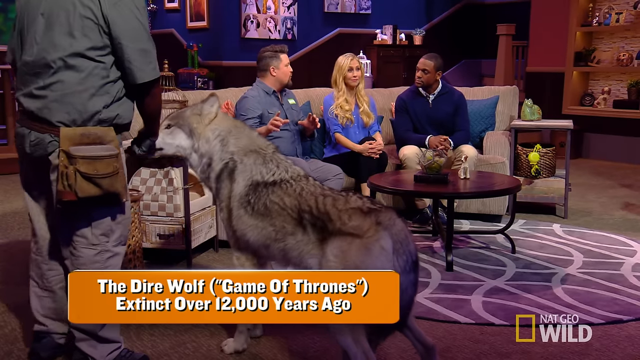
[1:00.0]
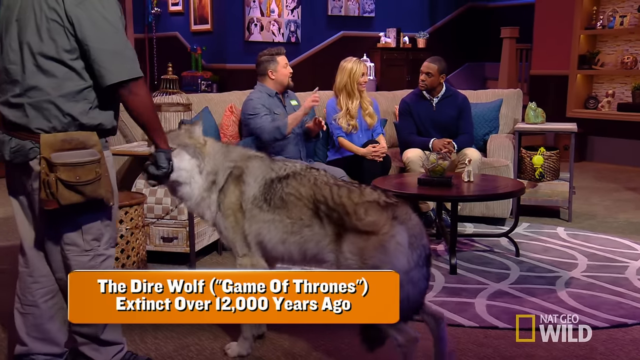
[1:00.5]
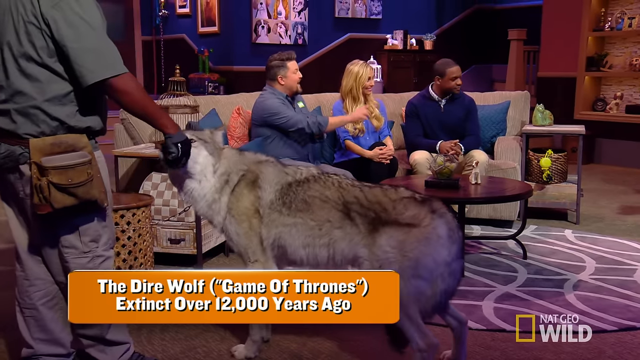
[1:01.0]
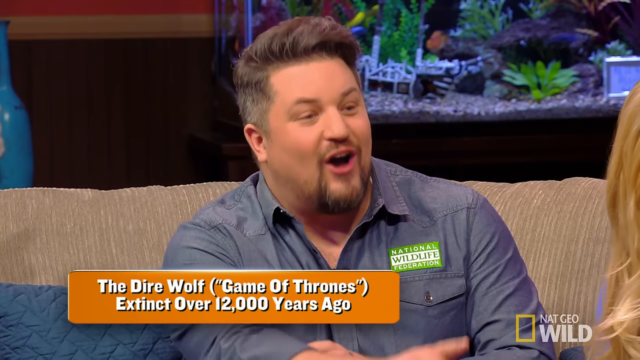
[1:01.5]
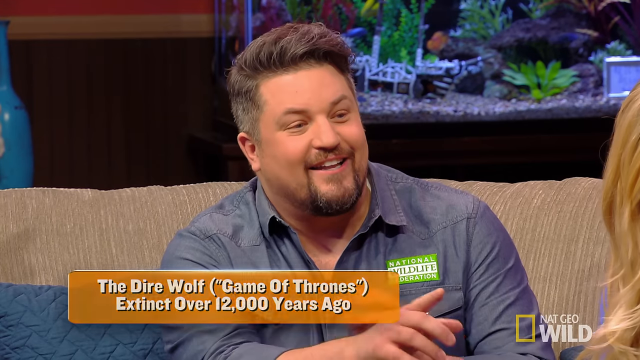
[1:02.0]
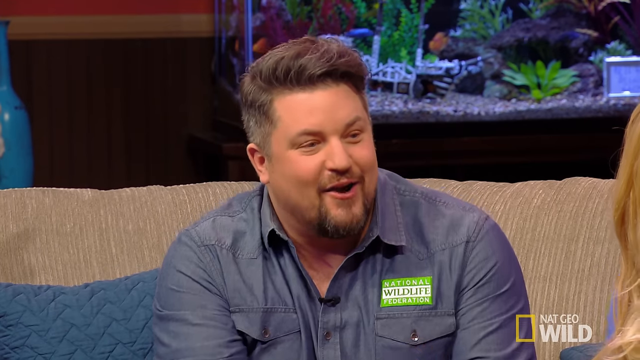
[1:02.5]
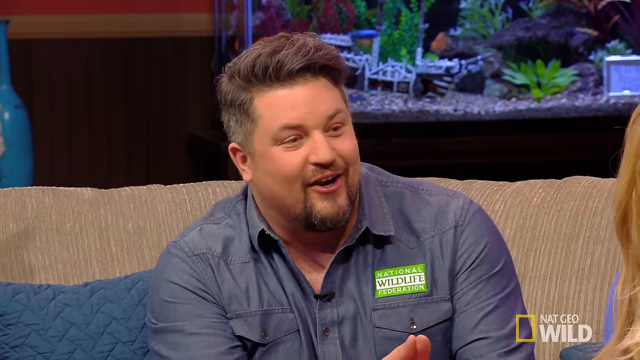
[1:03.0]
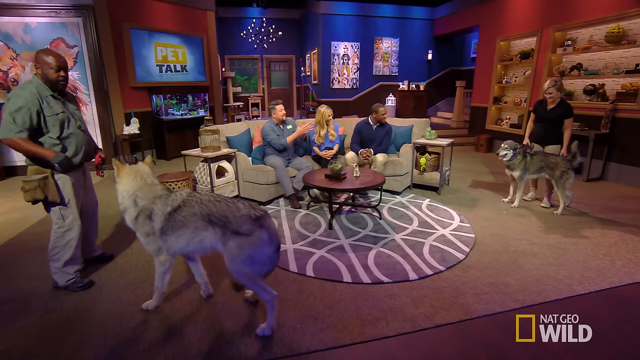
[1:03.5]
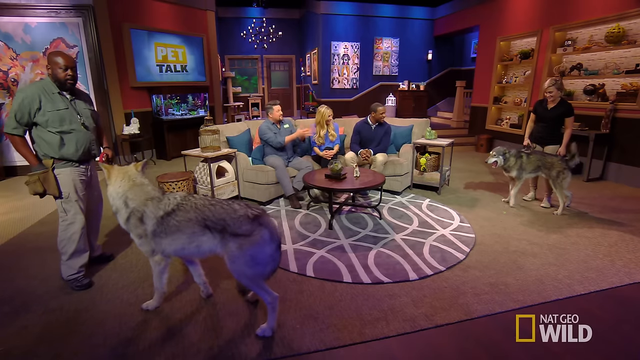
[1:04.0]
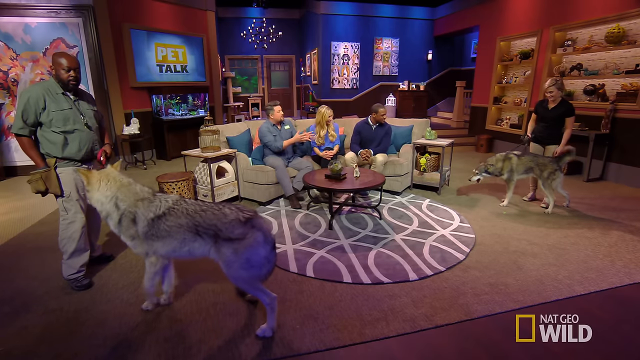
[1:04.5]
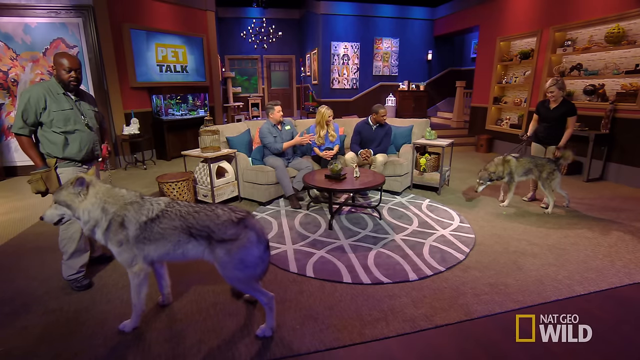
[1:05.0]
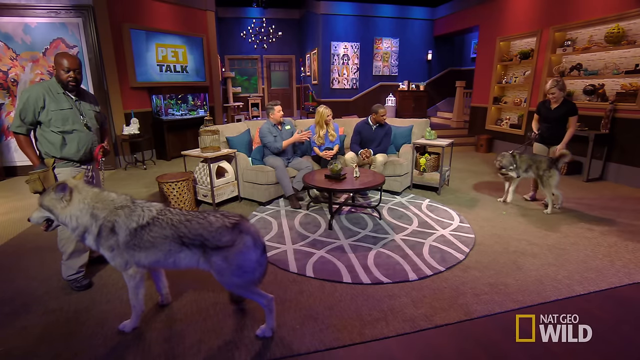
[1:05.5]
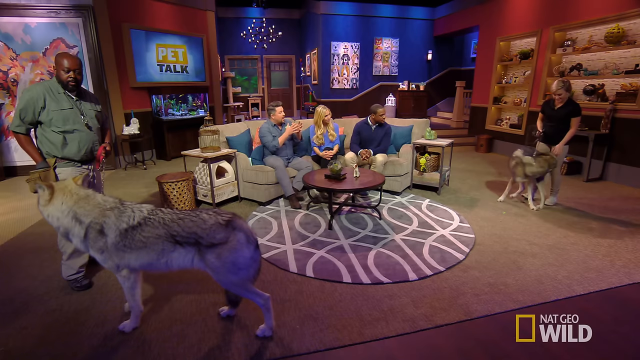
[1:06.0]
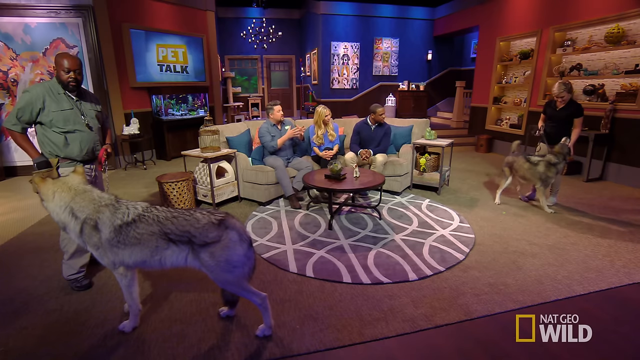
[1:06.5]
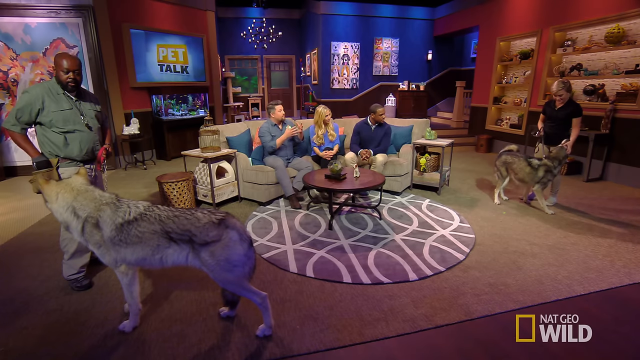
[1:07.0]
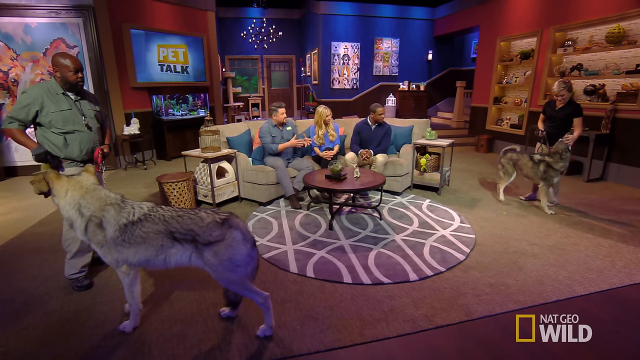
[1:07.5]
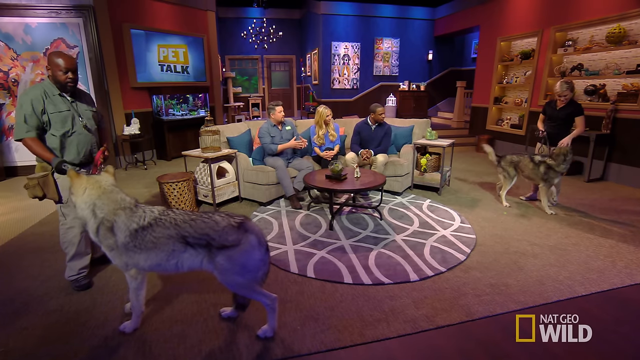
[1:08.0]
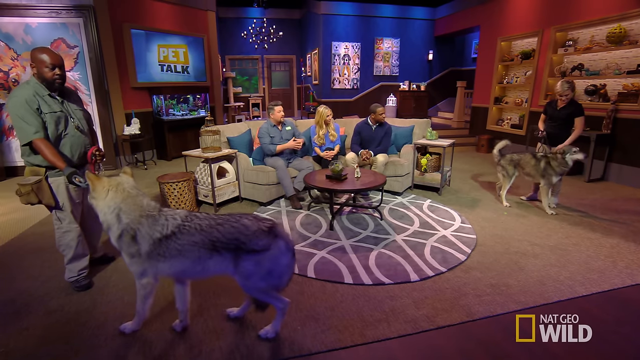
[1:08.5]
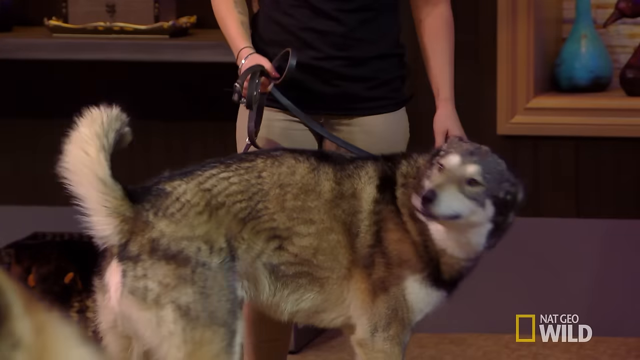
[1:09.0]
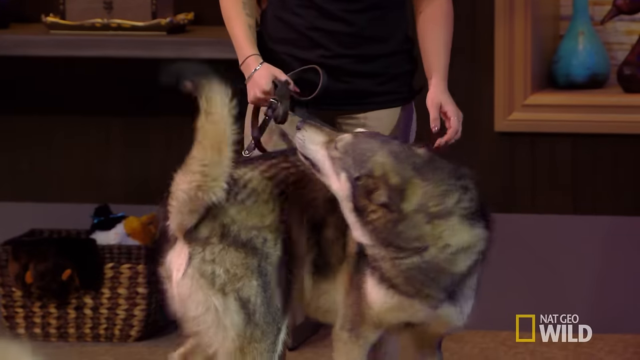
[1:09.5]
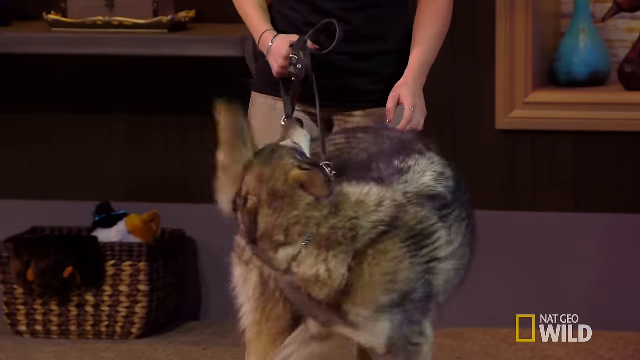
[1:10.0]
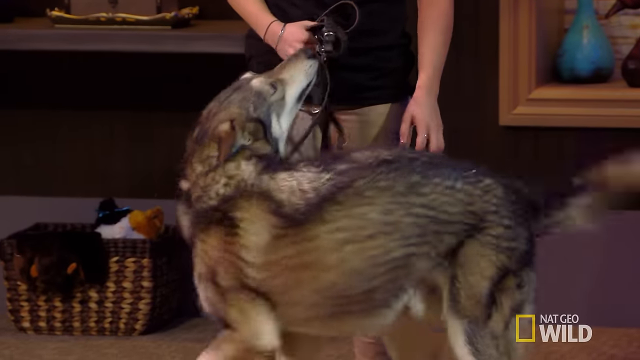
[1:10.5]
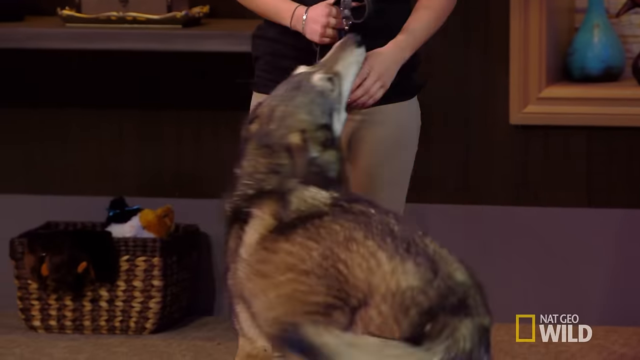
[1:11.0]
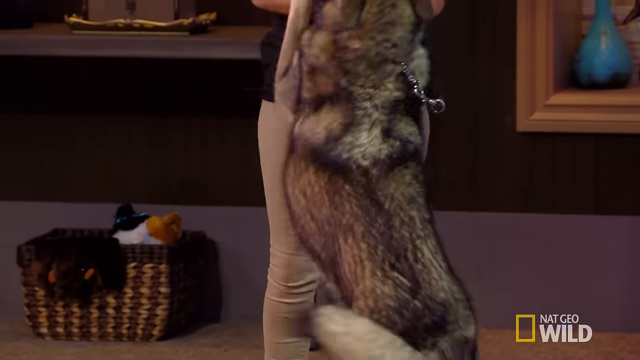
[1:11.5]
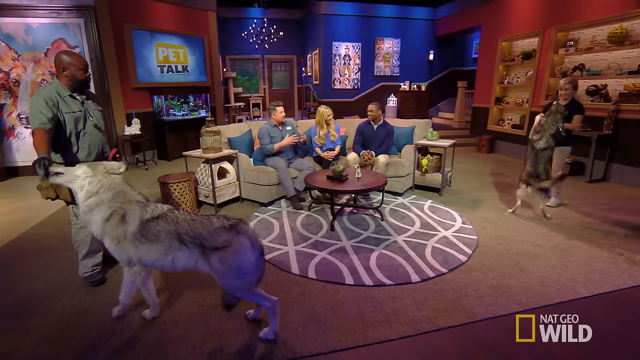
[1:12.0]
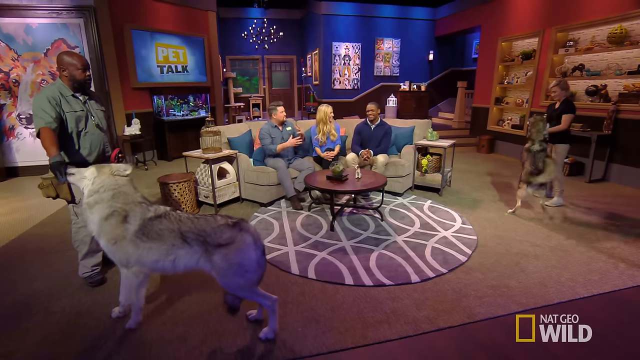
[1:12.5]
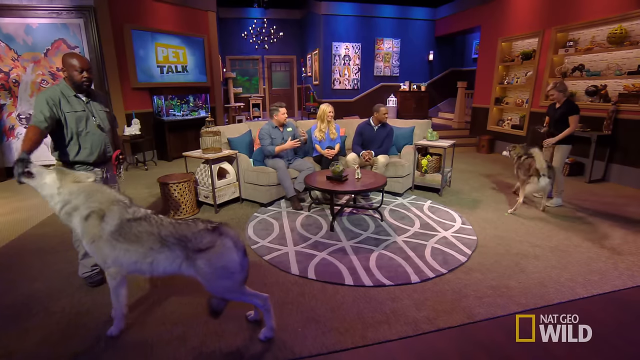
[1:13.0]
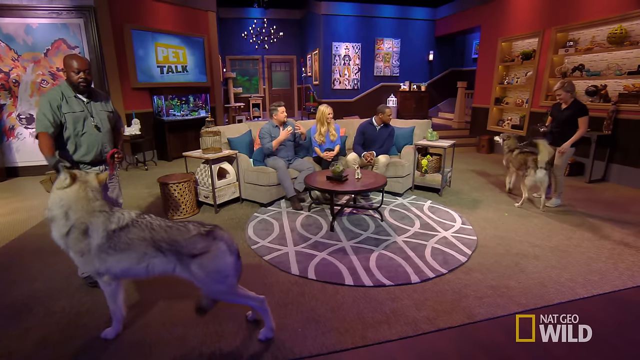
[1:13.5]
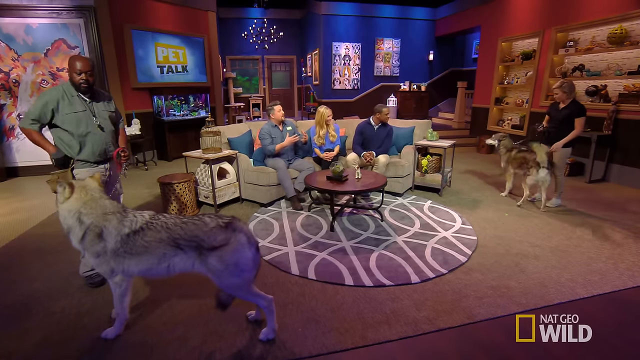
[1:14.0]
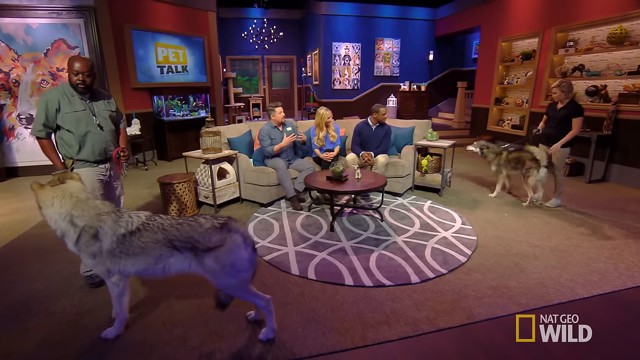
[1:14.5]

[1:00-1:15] The man talks as another dog appears on the ground, a different breed from the wolf dog that looks more like a Siberian husky; a lady is holding this second dog. Both dogs wiggle around the room. They look very alike, with similar features and colours, though the first one is a little bigger, and both seem to be having fun. "pets talk" appears somewhere on the wall, and there are many animal pictures, particularly of dogs, along with some stuffed animals on a shelf.